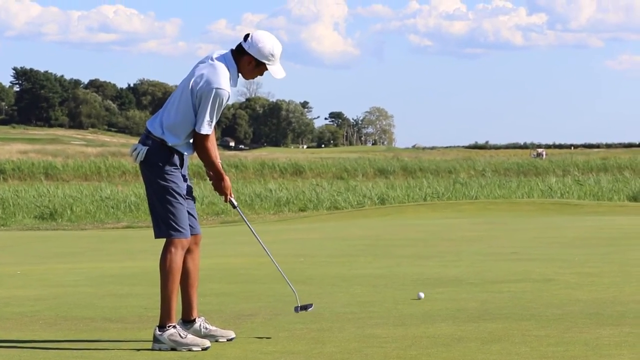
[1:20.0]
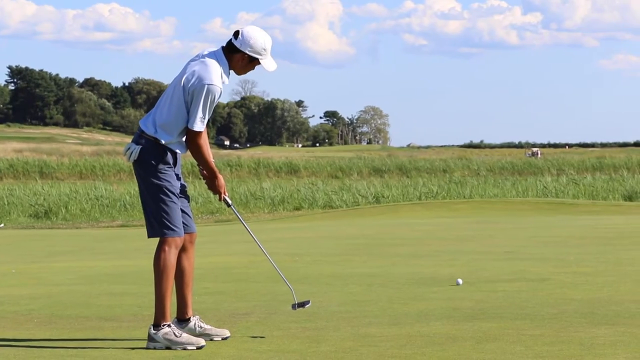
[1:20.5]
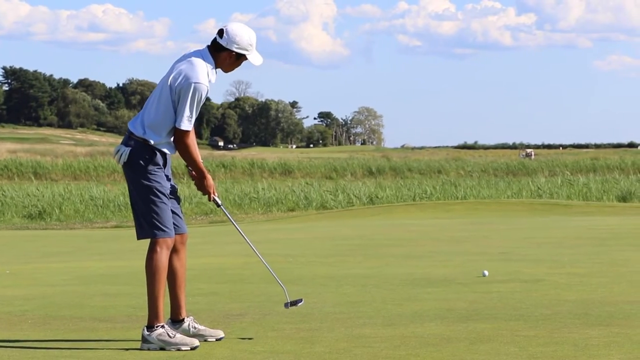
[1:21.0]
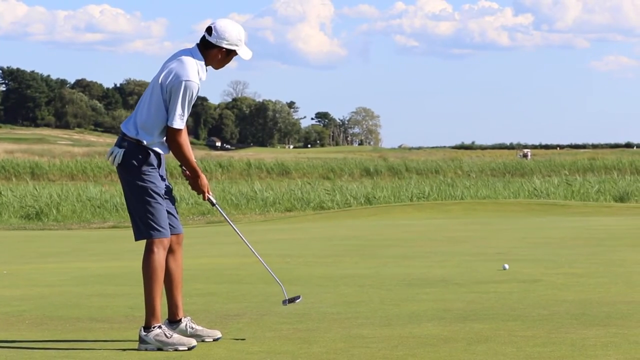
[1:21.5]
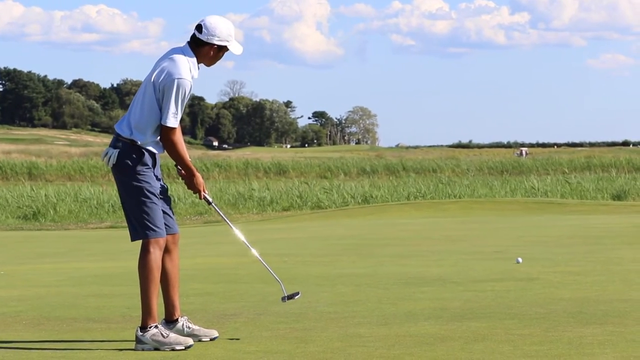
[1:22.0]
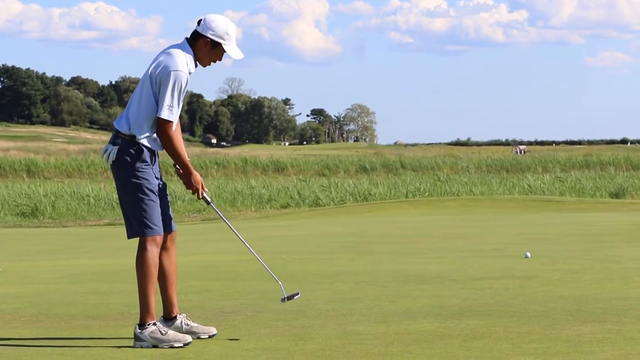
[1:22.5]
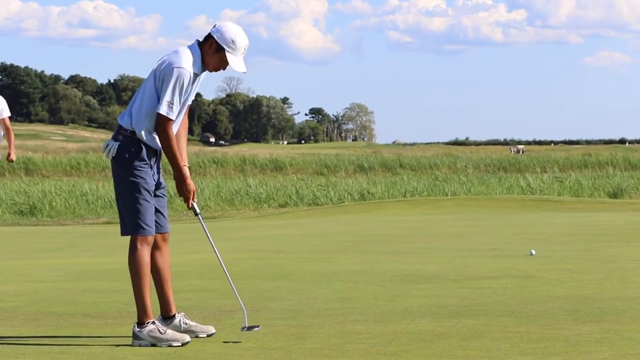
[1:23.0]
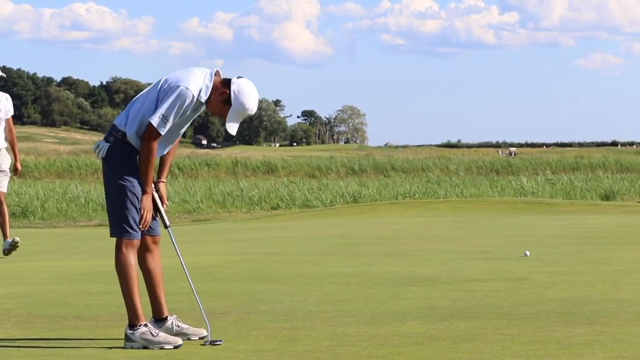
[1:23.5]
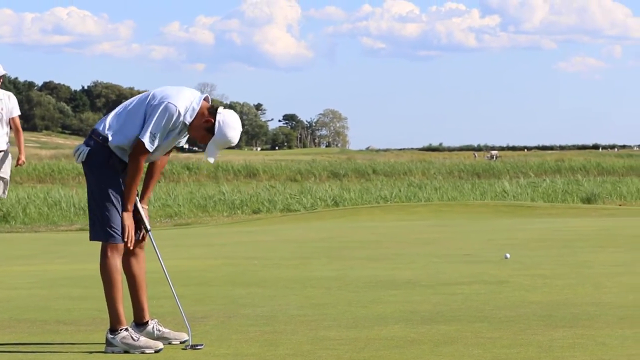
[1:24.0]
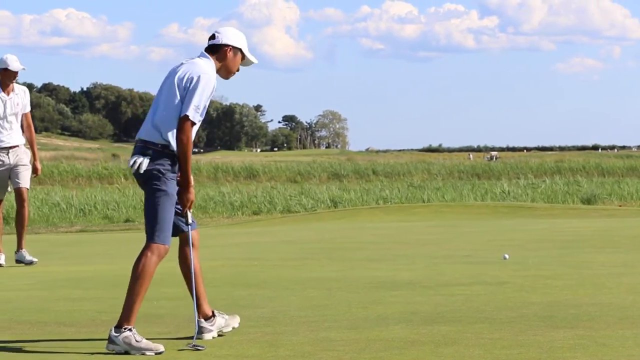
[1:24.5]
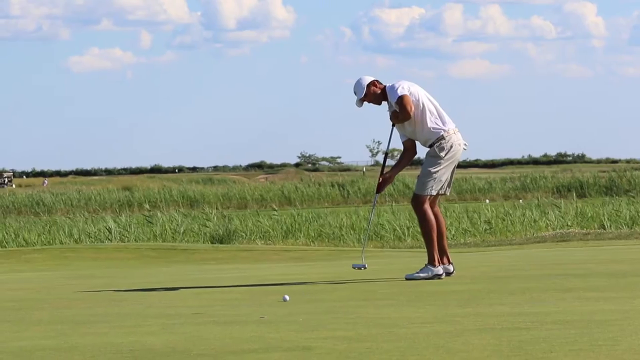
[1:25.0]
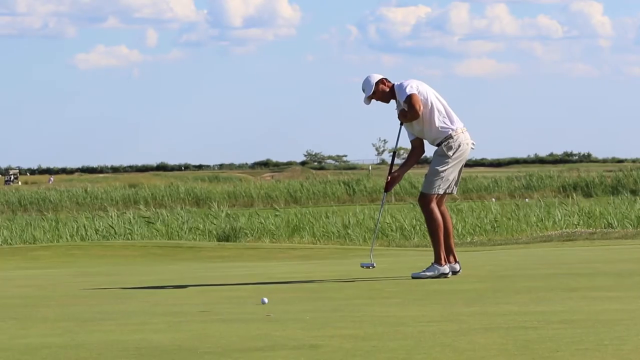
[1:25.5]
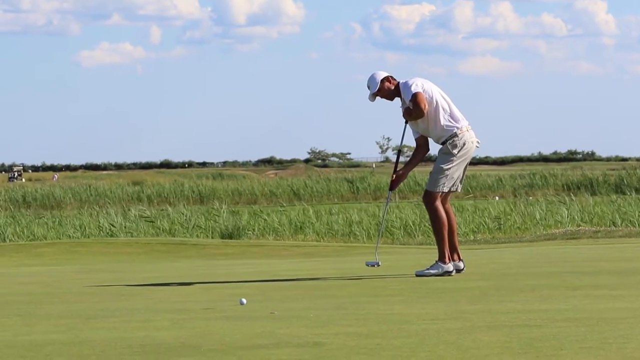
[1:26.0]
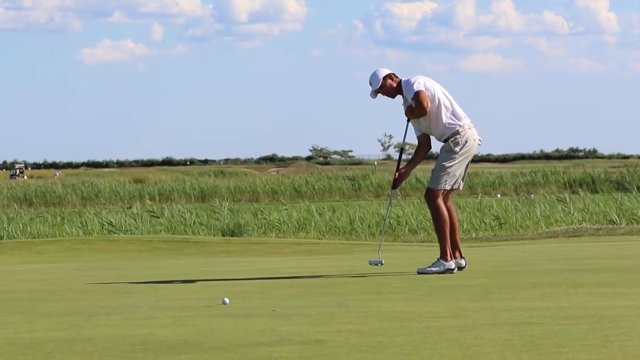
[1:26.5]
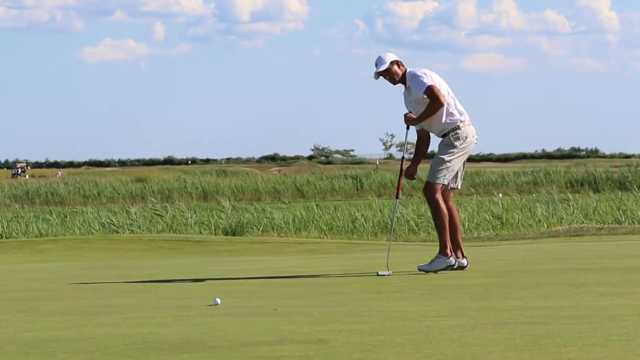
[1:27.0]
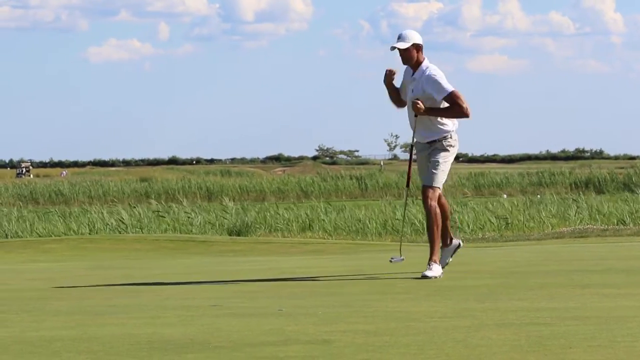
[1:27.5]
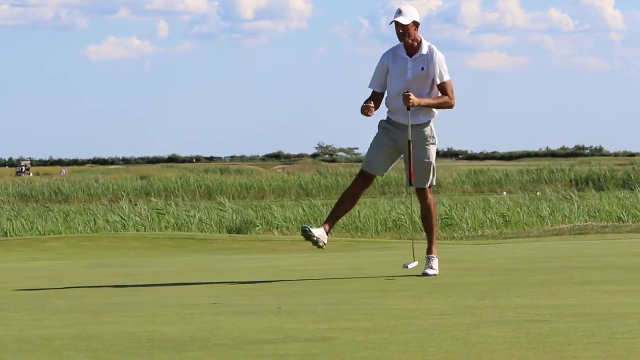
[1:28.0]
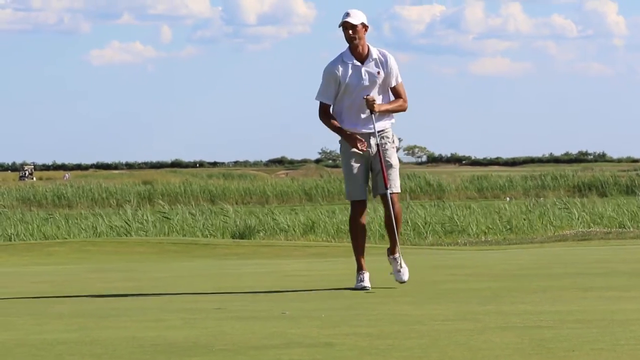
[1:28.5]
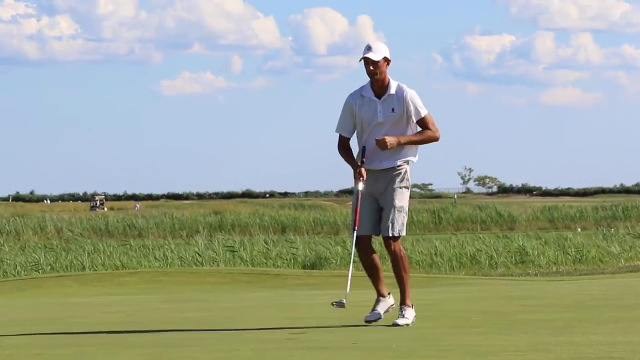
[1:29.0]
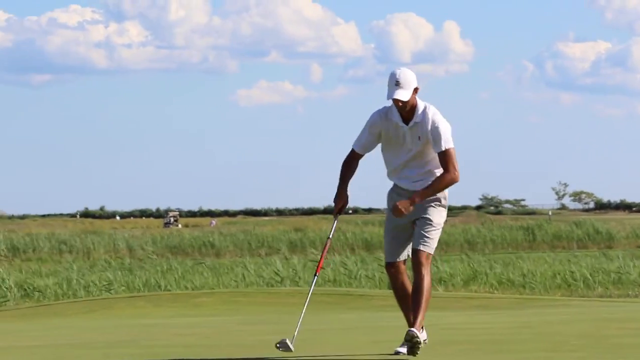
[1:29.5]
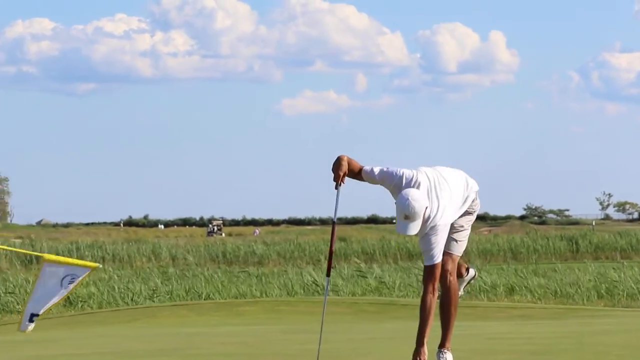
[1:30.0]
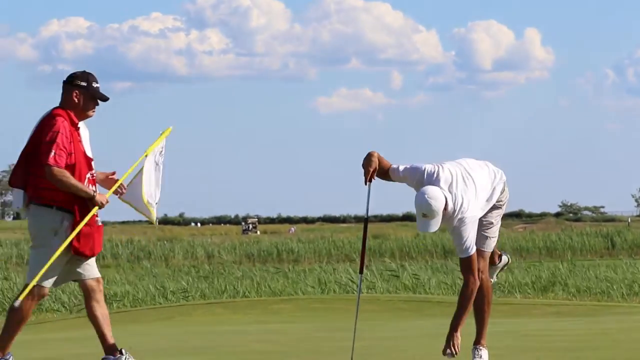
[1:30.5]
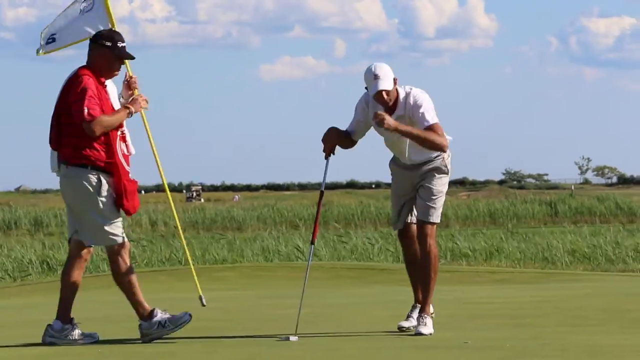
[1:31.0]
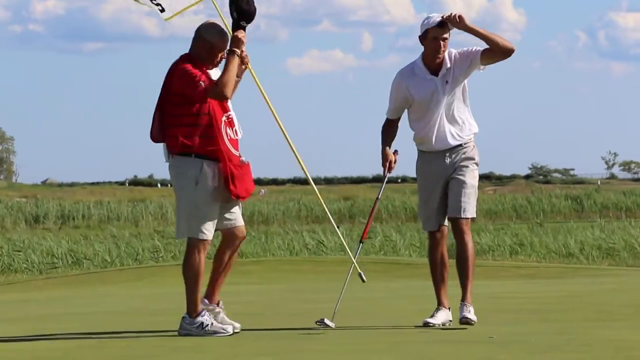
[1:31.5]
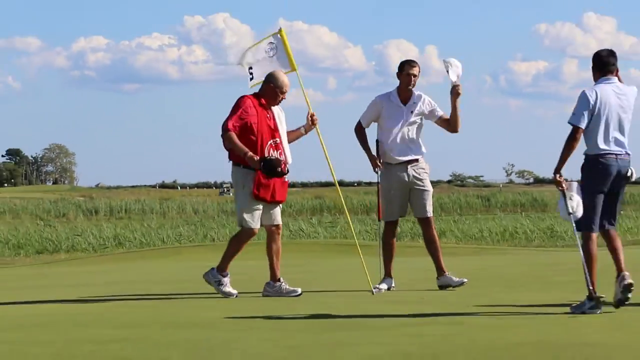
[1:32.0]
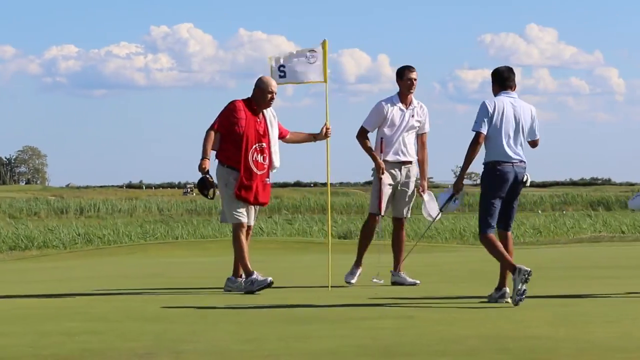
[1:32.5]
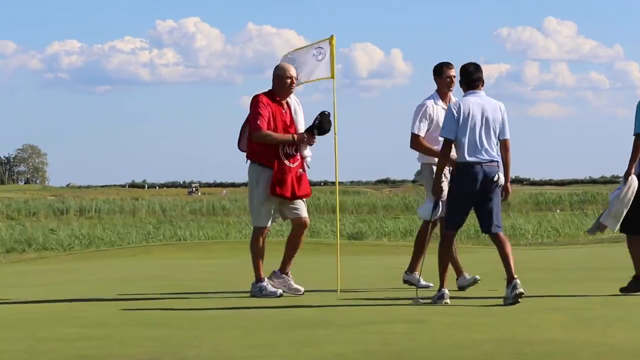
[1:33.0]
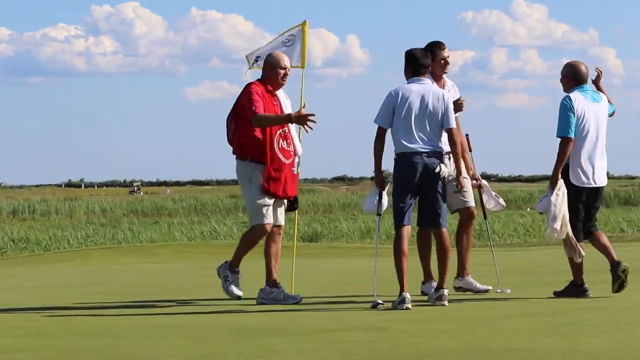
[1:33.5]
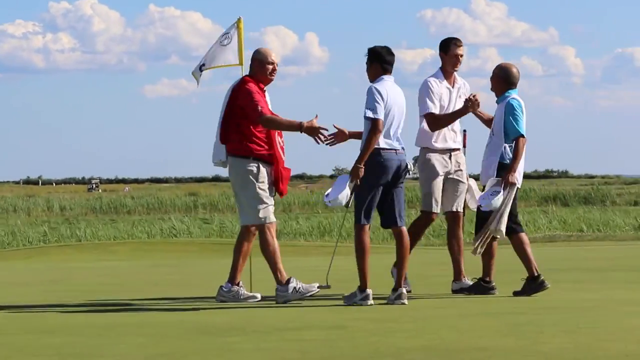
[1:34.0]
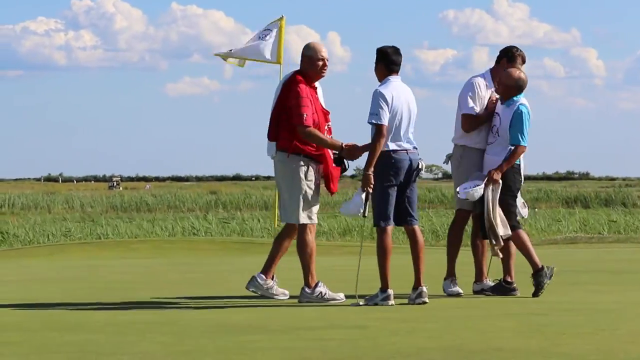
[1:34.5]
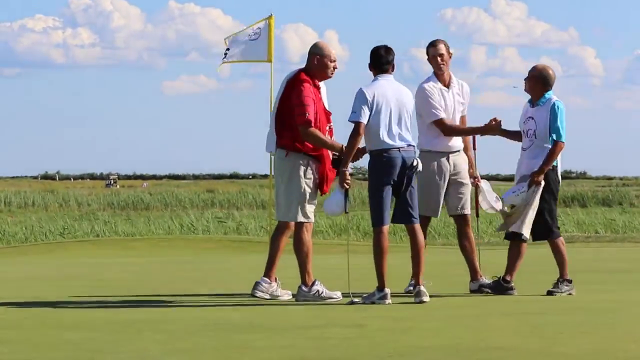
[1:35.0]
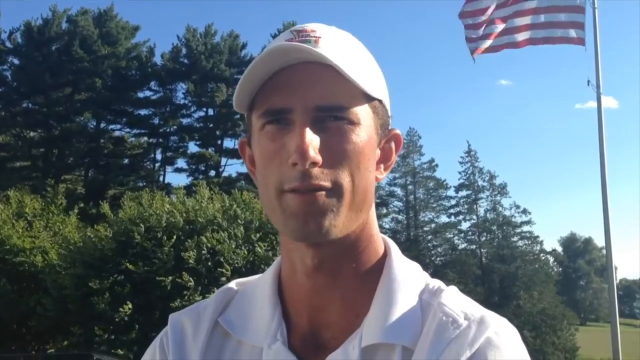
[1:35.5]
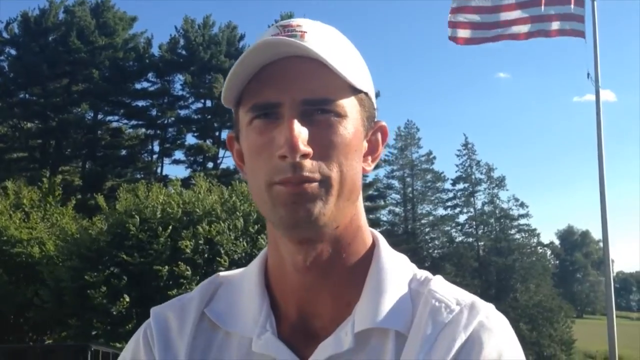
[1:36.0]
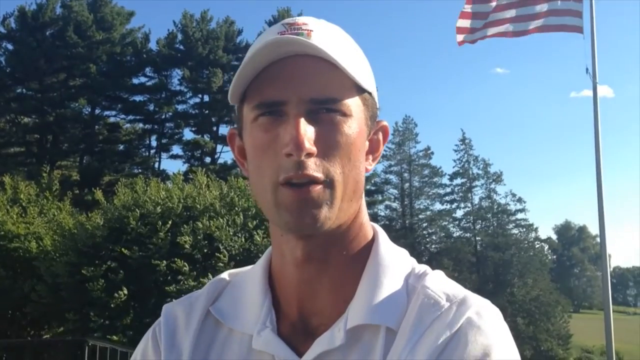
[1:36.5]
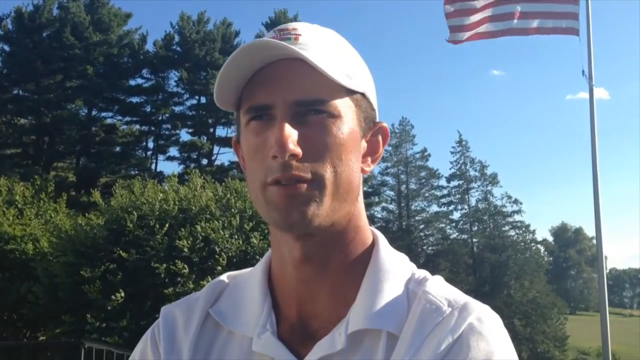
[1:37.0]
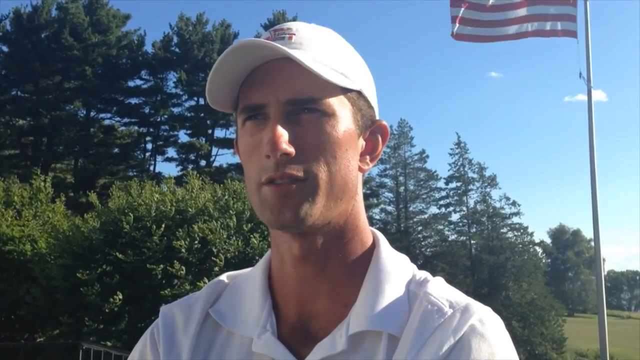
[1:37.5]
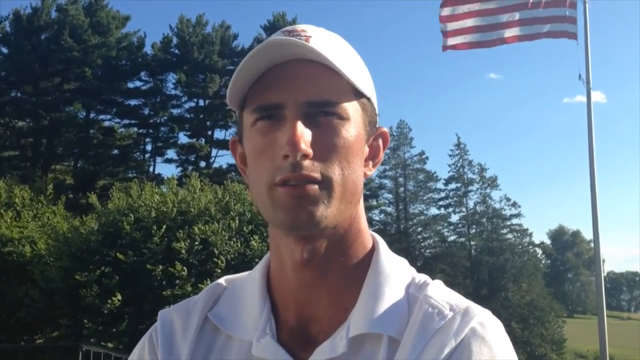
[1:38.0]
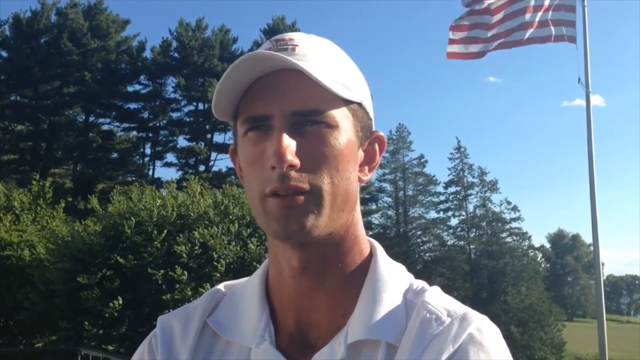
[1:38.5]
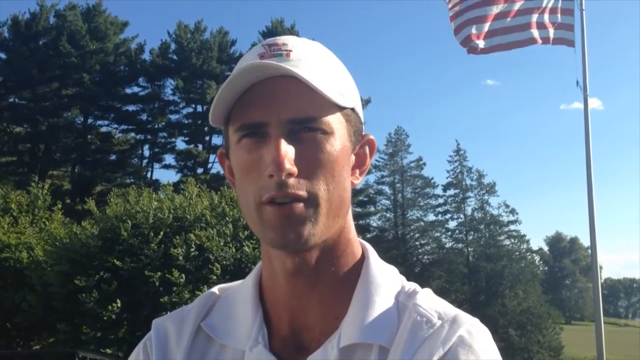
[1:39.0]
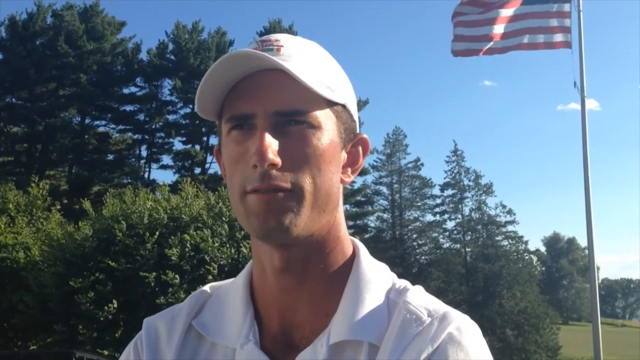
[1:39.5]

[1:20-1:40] The golfer in blue shorts takes another putt, which does not go in the hole. Another golfer, wearing kind of beige shorts and with quite tanned skin, then attempts a putt, seemingly on the same hole. Long grass is behind the putting green under a blue sky. He sinks the putt, celebrates with a fist bump, takes his cap off and shakes hands with a friend next to him, while a course worker puts the flag back in the hole. The video cuts to a man seemingly being interviewed or speaking directly to the camera; he appears to be one of the golfers, though it is unclear whether he is the one in blue shorts or beige shorts. An American flag blows behind him, and he seems quite happy.